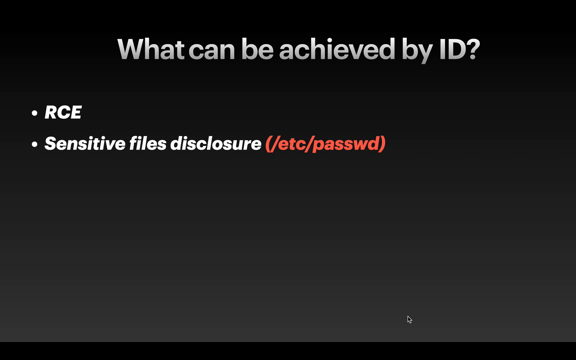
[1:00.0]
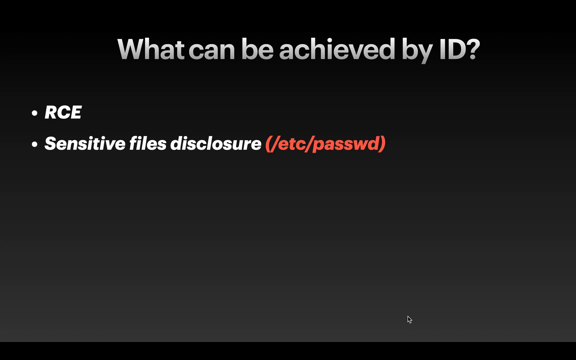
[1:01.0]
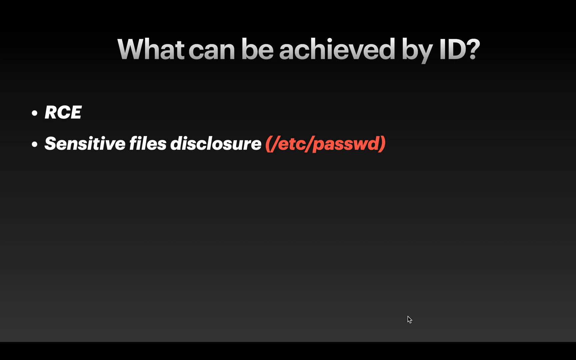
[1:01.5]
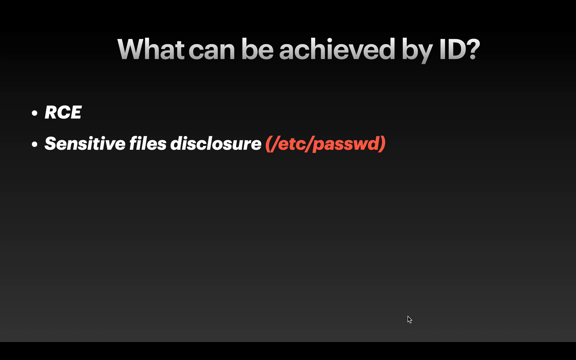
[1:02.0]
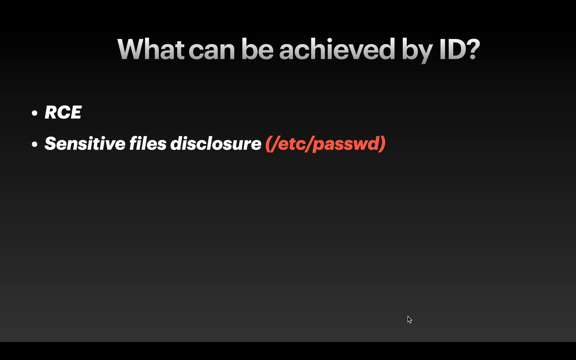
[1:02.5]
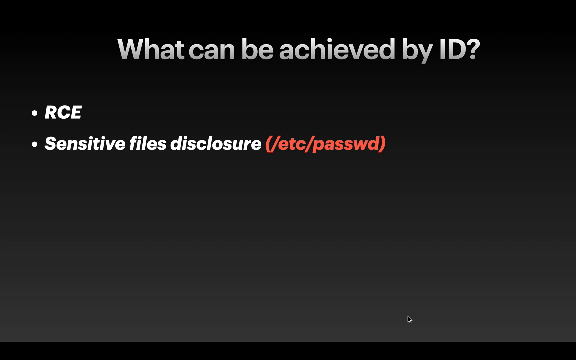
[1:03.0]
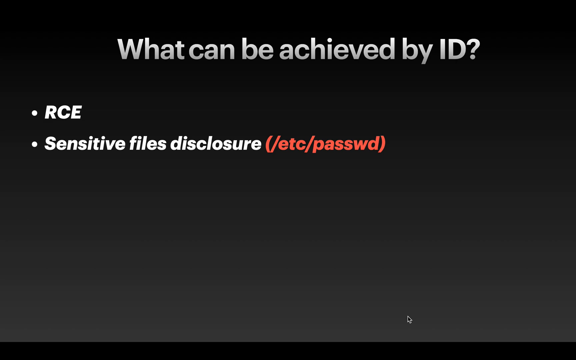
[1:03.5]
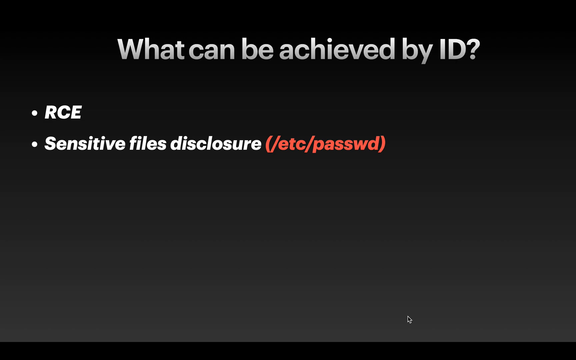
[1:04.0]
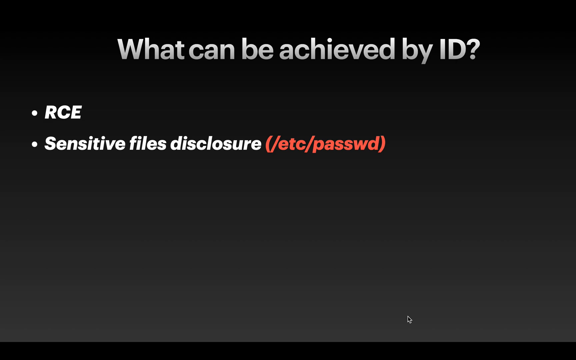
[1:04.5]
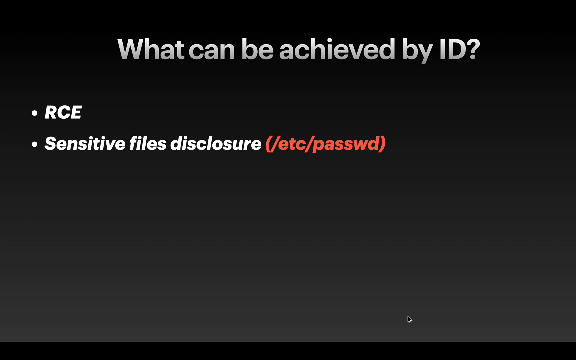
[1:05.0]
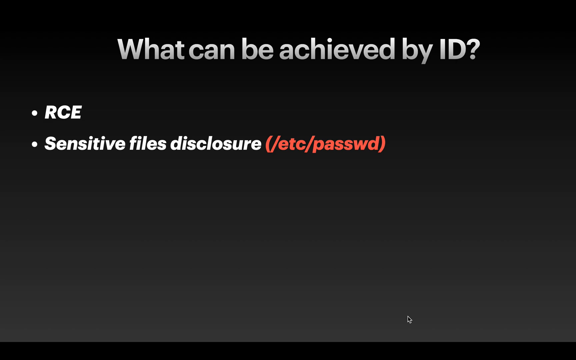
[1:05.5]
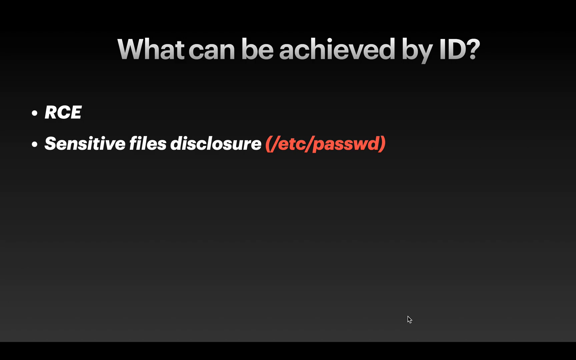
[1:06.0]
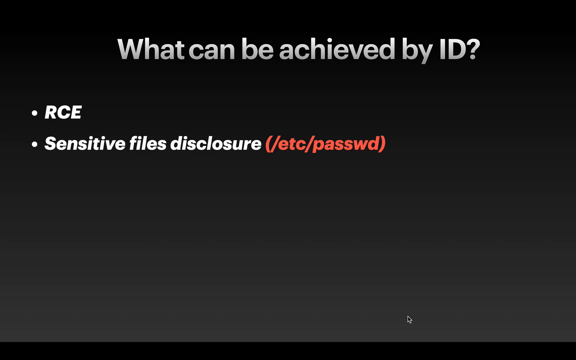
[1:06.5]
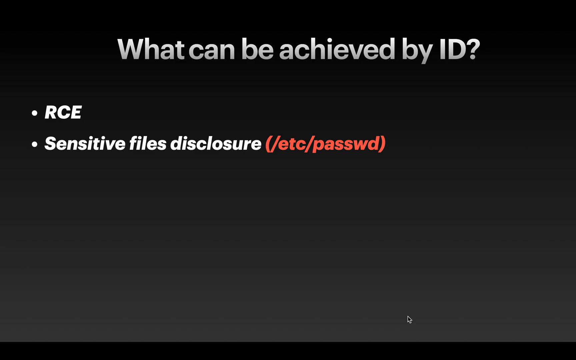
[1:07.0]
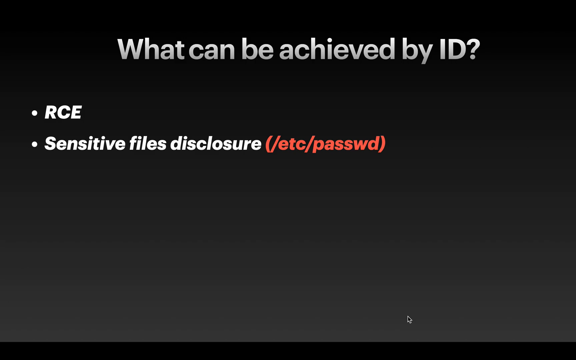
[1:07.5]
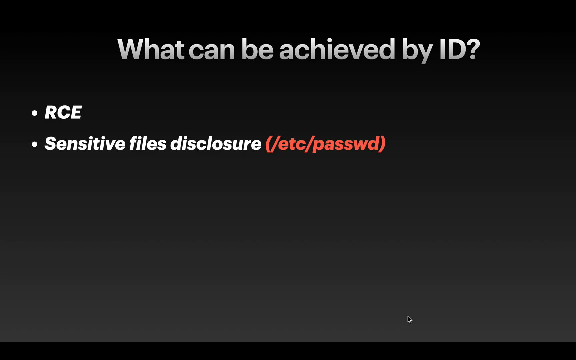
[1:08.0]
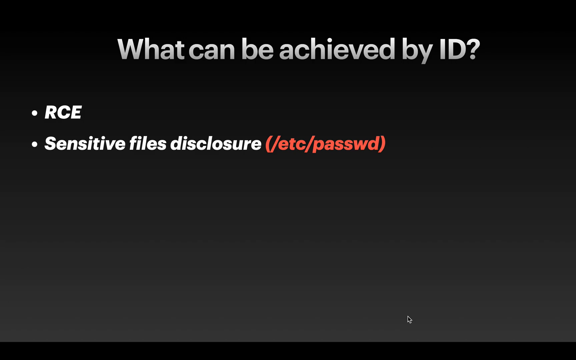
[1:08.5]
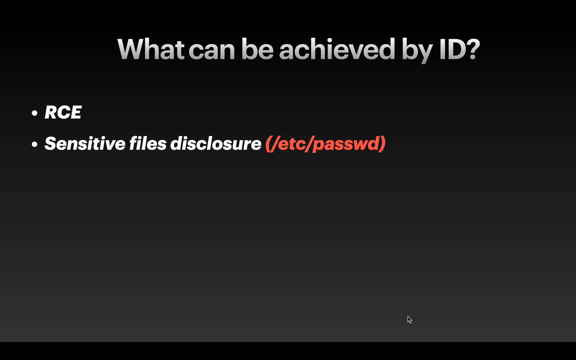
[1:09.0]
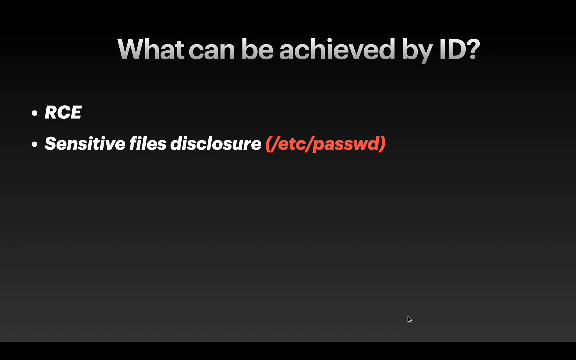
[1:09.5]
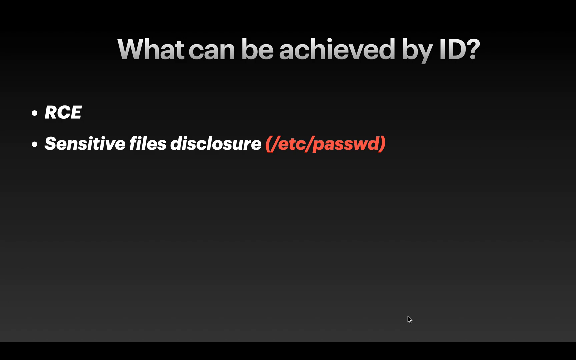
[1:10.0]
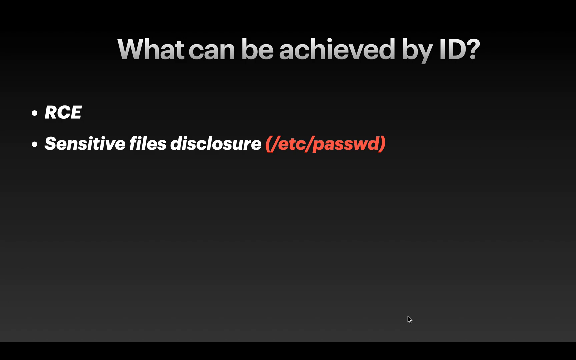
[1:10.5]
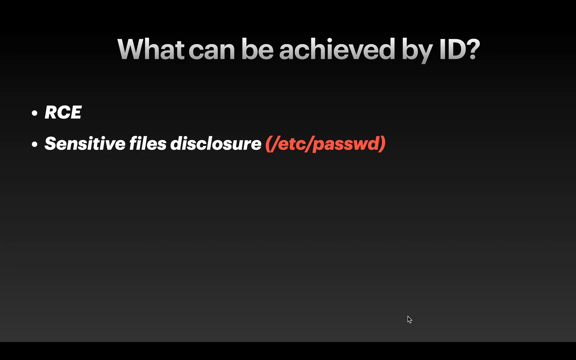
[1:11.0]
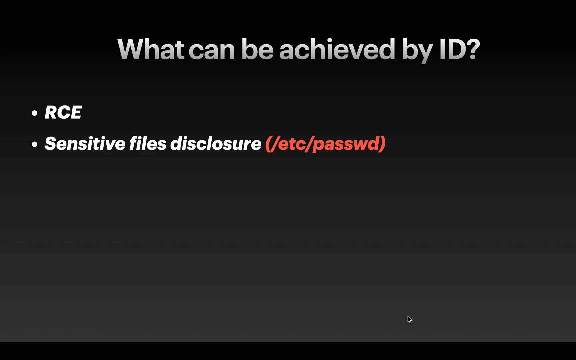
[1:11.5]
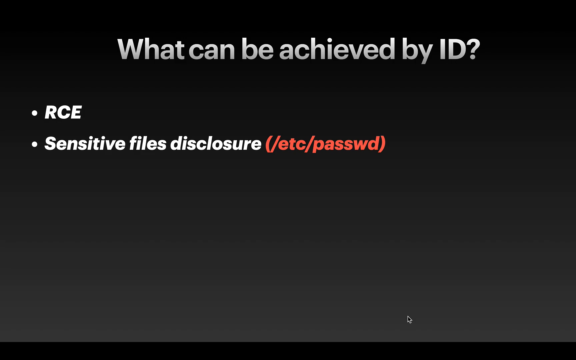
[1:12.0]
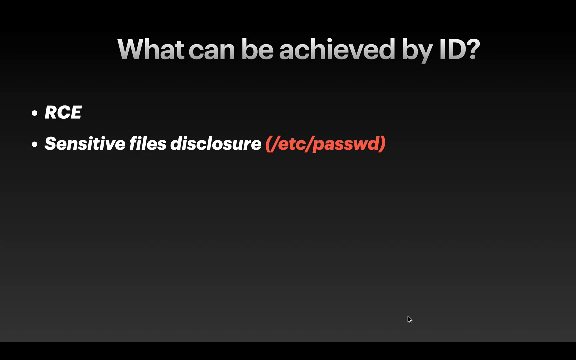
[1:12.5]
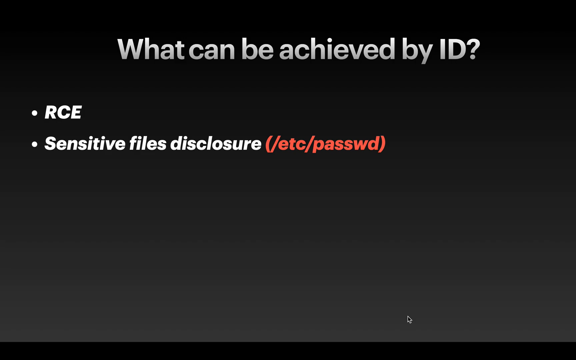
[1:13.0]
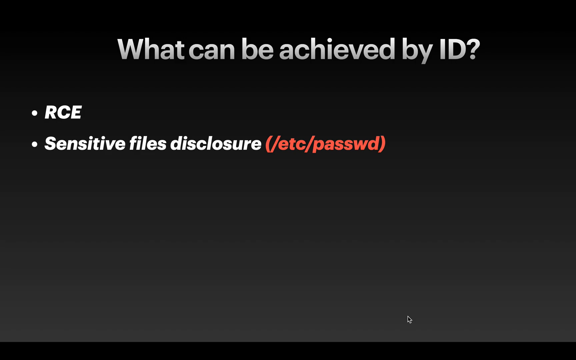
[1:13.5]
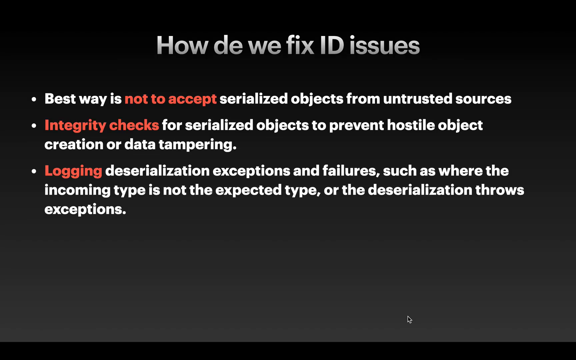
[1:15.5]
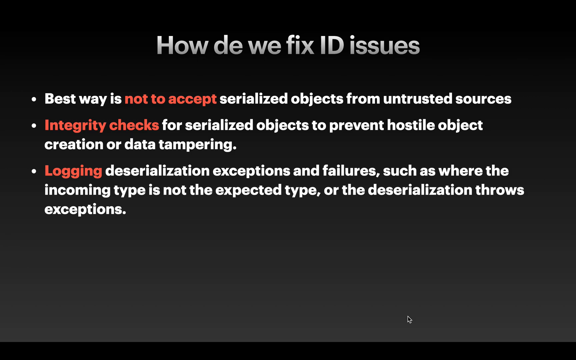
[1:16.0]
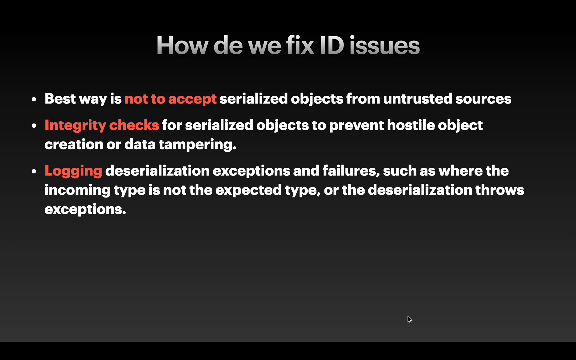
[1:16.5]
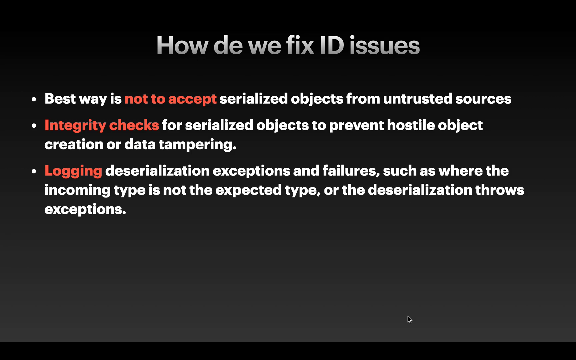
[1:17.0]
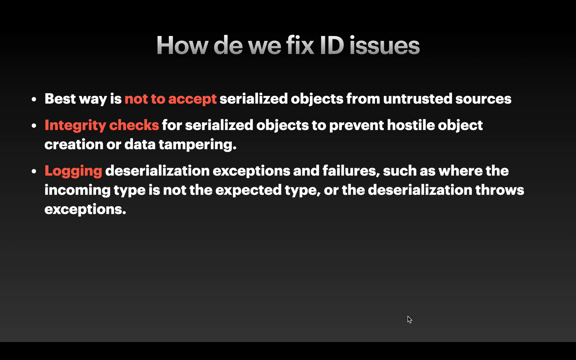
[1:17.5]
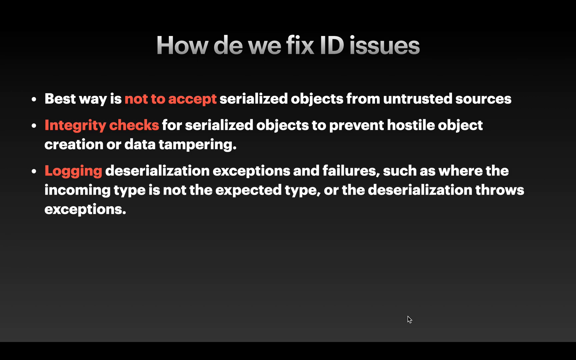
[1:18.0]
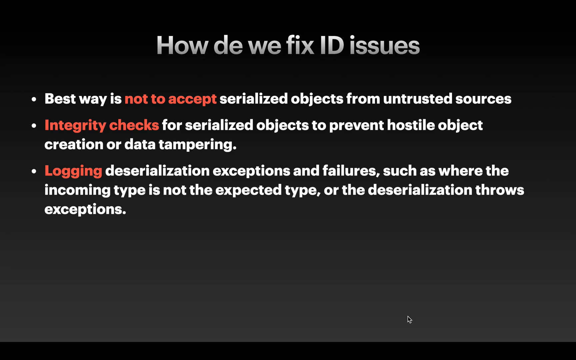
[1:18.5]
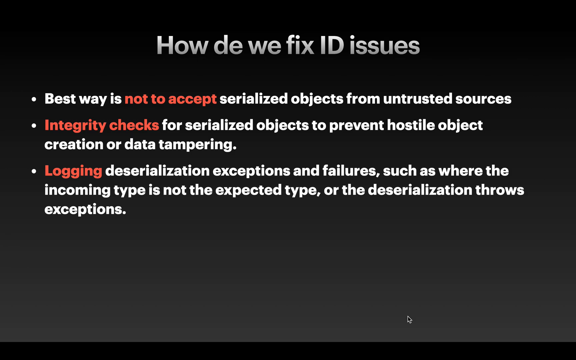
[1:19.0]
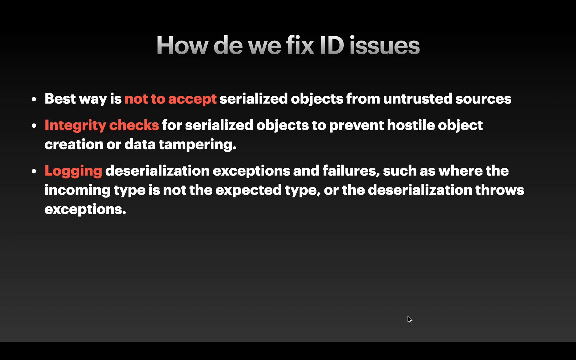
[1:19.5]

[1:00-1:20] The slide asking "What can be achieved by ID" stays on screen, listing RCE and sensitive files disclosure, with text in parentheses mentioning ETC and password. The slide seems to convey that if ID happens, sensitive information can be lost. Another slide follows about how to fix ID issues, with a series of tips; the tip shown says the best way is to not accept objects from untrusted sources.